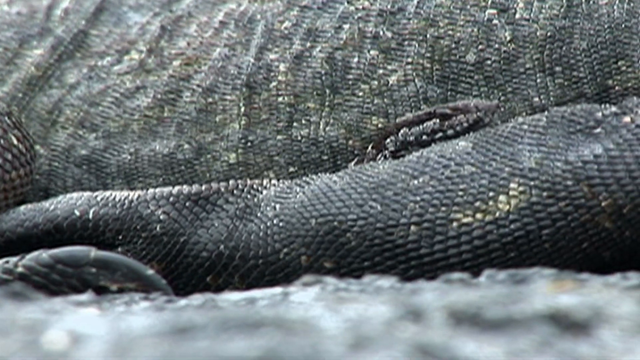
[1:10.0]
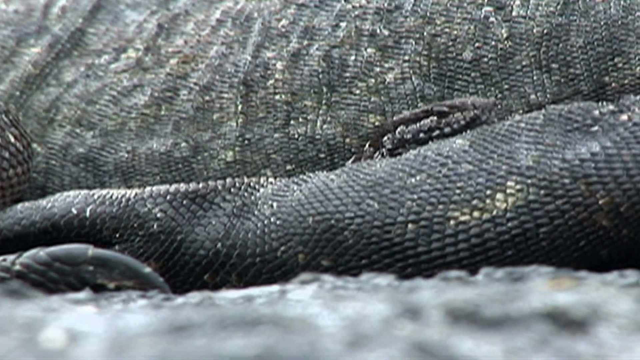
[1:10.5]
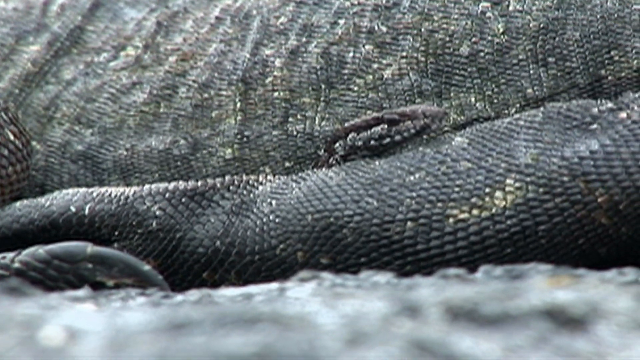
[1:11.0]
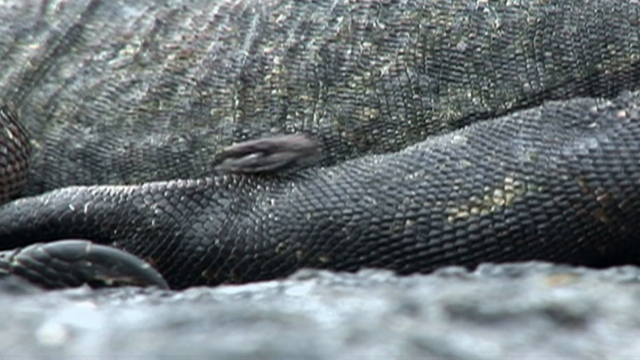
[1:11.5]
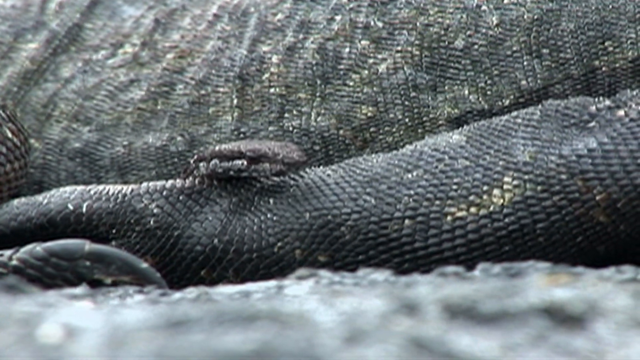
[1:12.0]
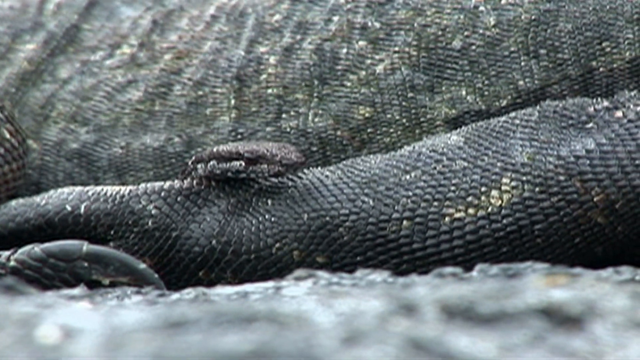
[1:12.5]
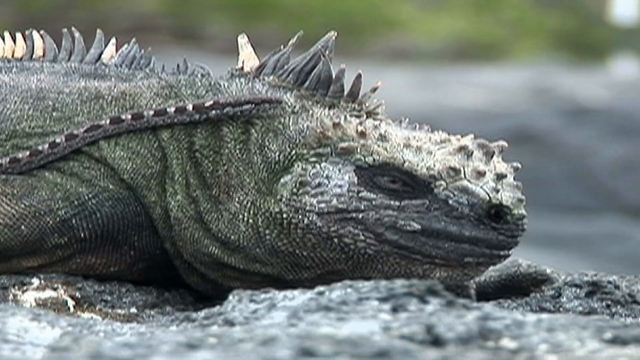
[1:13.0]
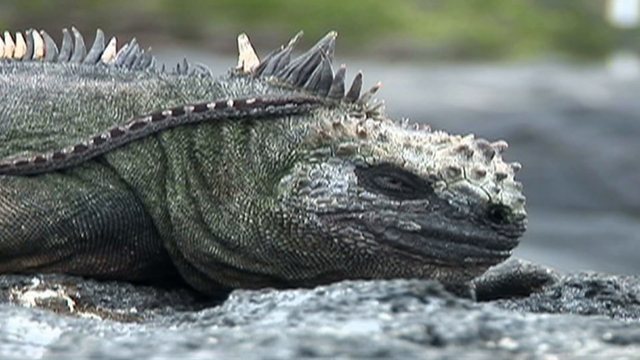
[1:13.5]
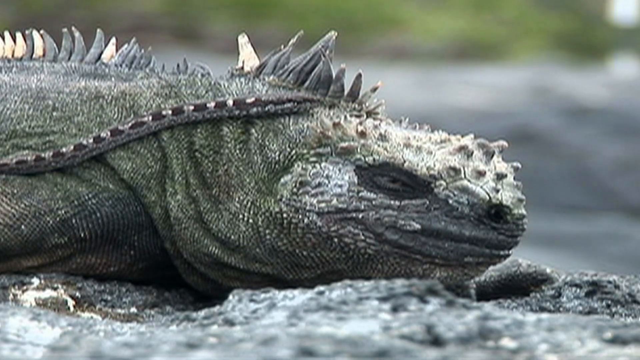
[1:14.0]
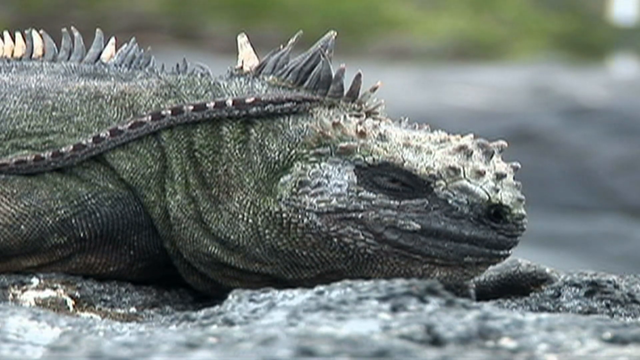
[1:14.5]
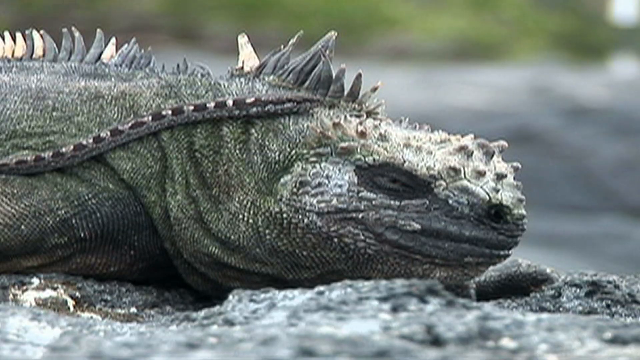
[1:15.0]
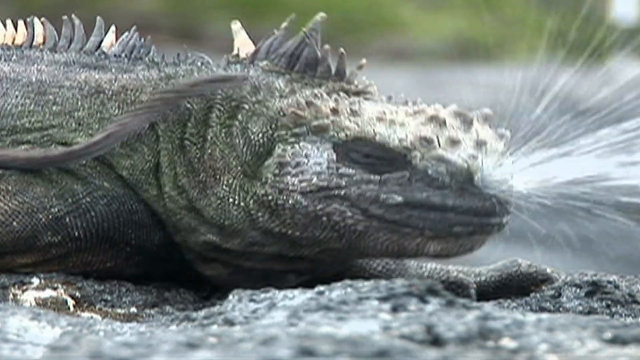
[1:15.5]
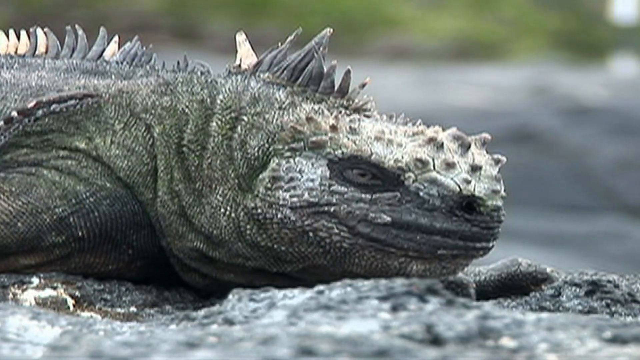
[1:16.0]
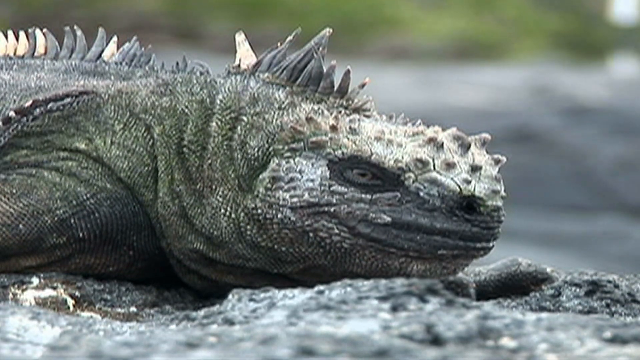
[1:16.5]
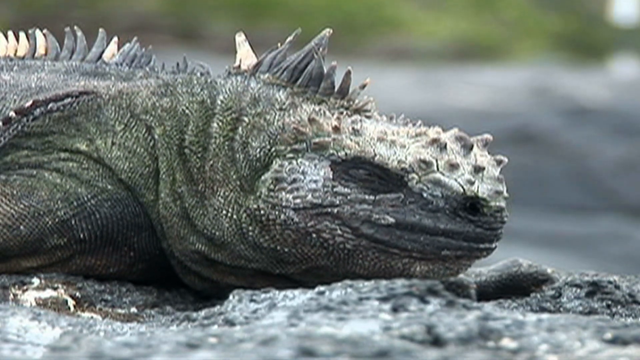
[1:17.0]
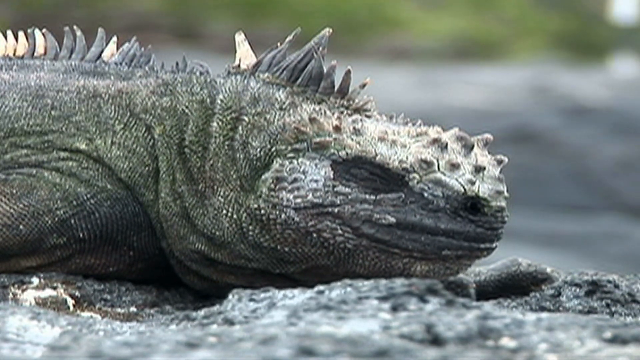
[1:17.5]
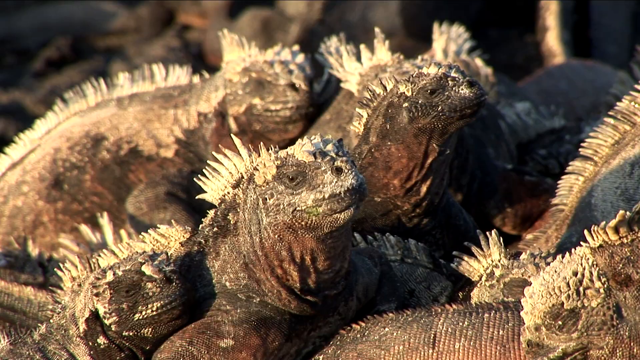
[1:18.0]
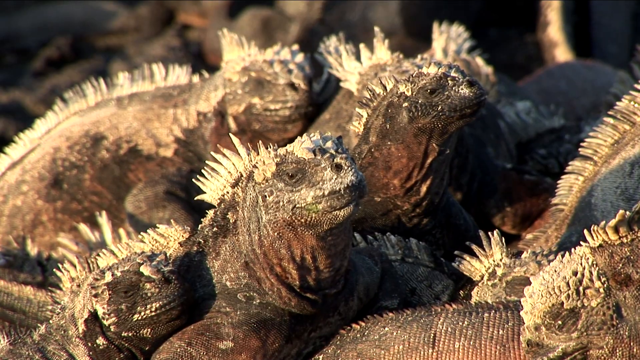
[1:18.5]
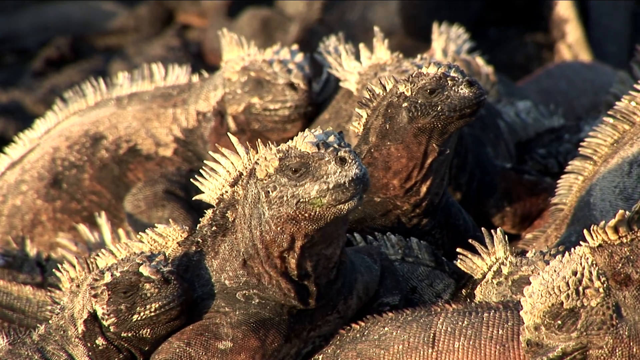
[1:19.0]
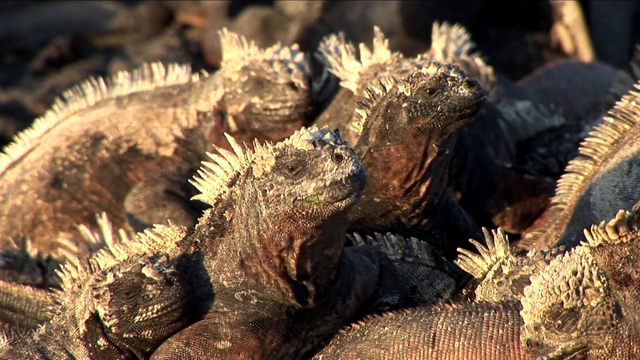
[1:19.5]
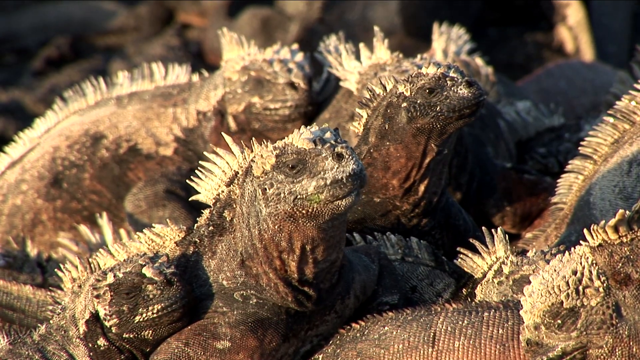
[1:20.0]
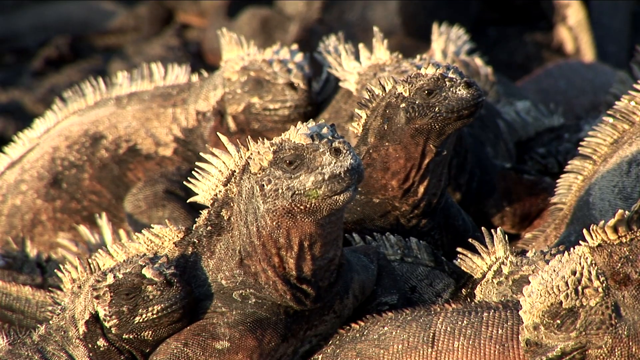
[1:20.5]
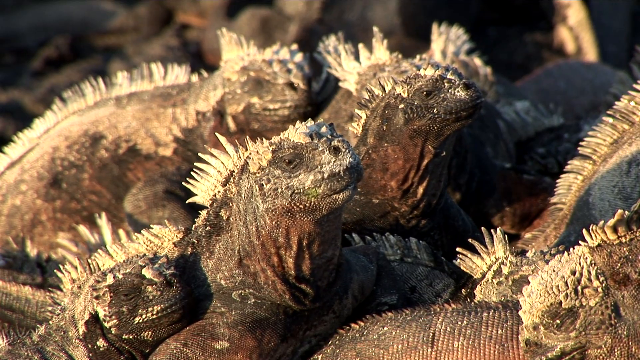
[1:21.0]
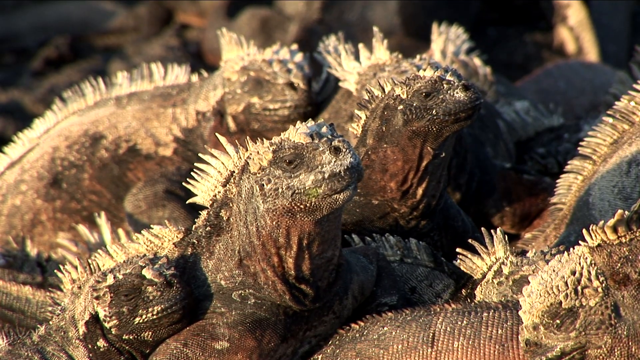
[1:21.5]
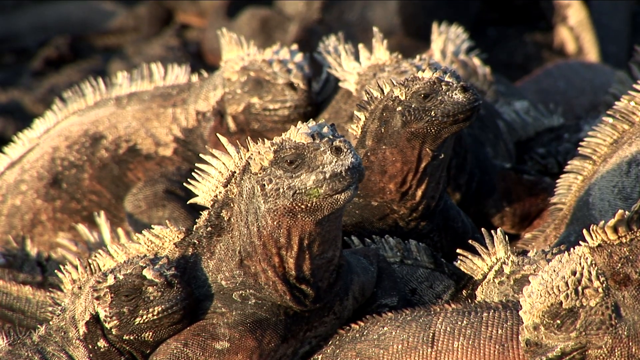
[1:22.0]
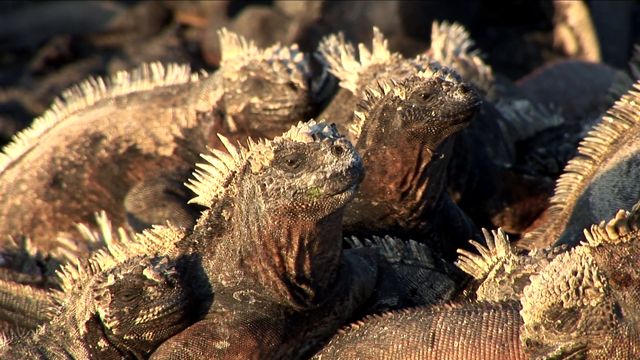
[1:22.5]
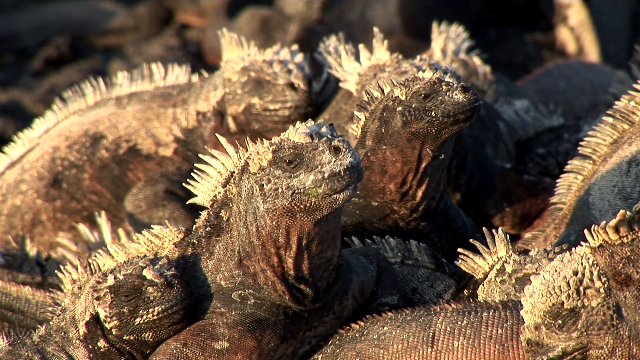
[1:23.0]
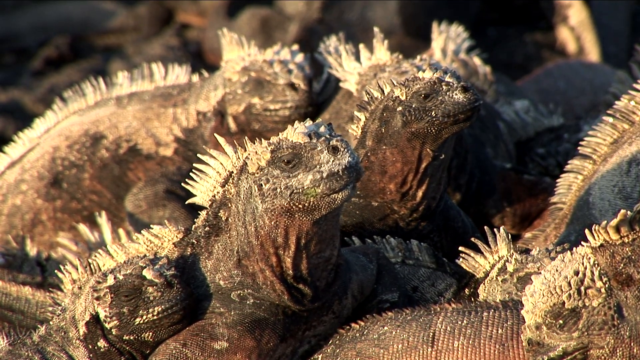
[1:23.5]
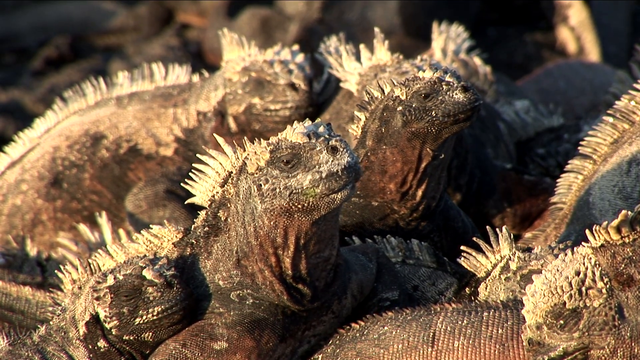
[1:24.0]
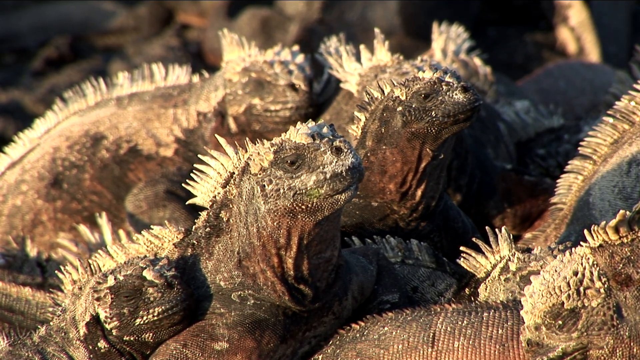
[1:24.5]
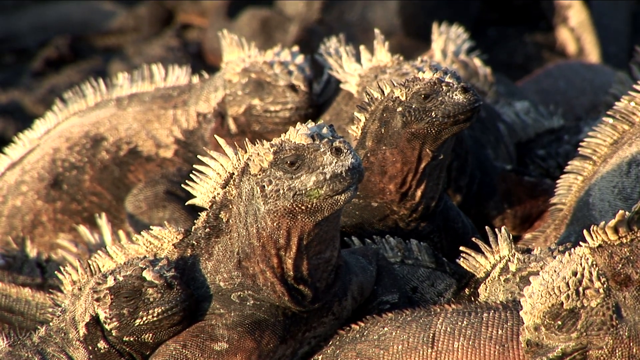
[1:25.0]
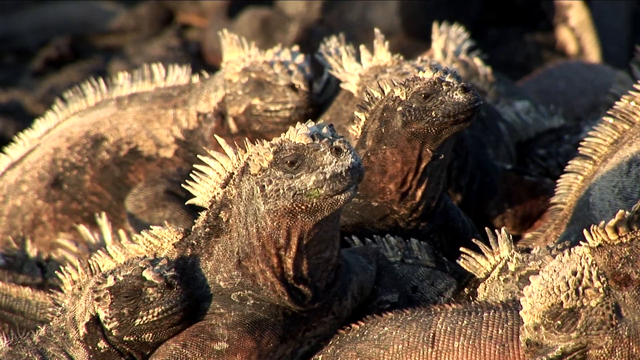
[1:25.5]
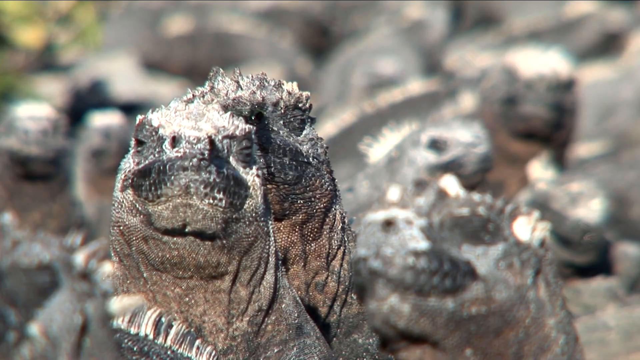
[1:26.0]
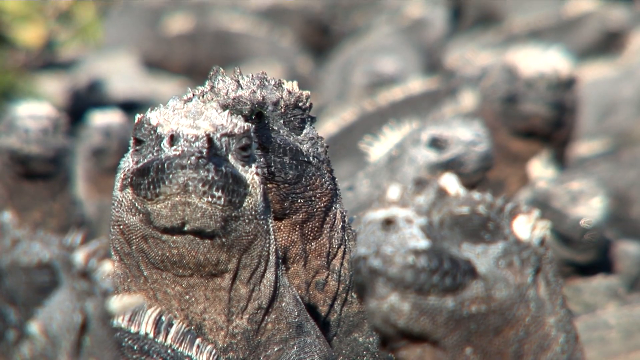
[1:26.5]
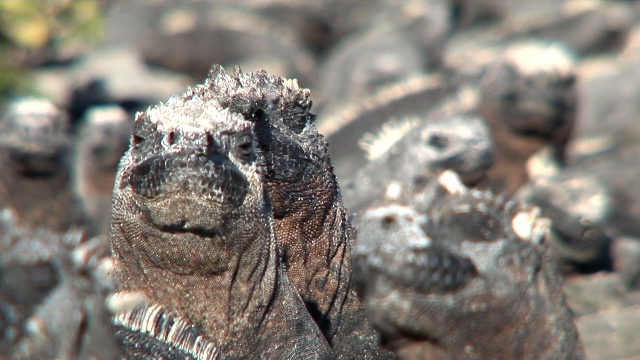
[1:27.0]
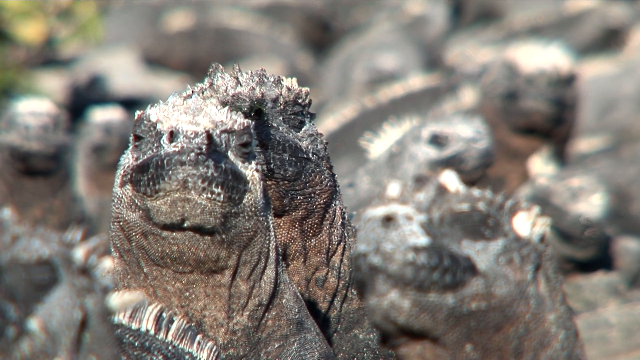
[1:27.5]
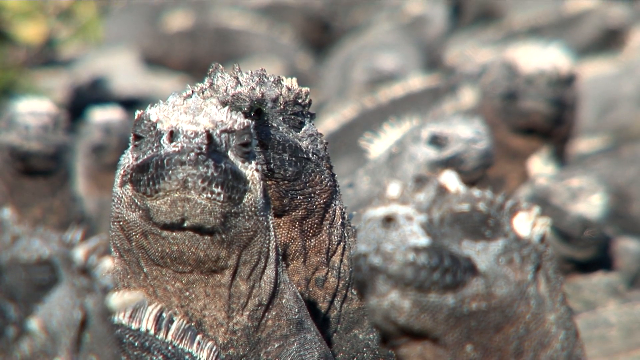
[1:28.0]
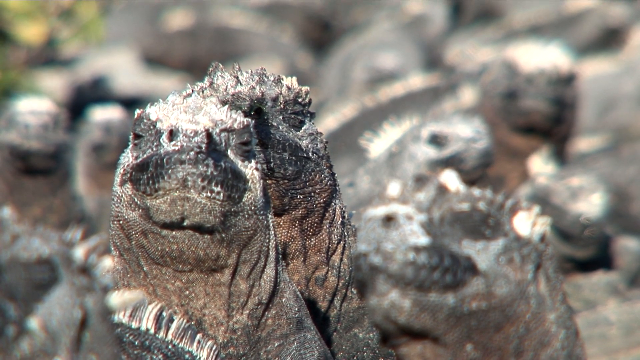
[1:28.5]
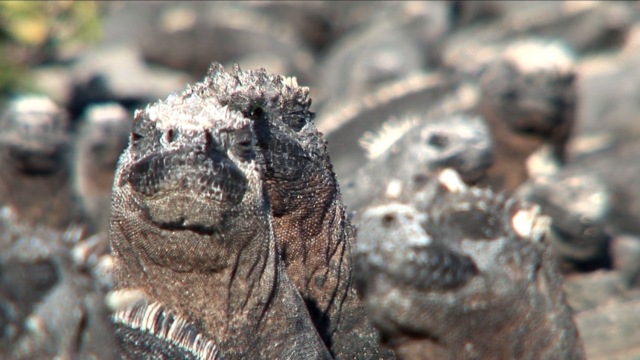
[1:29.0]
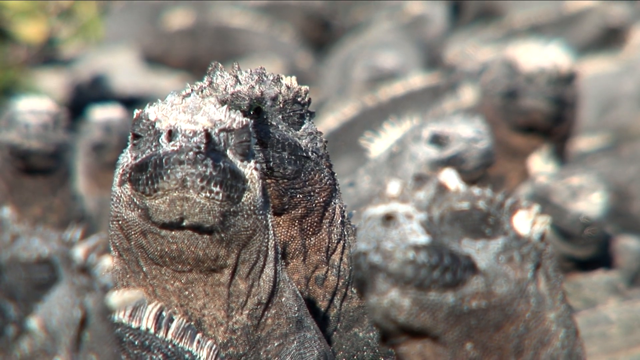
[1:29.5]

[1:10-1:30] The iguana is shown with a little snake creeping up behind its tail. The iguana looks like it is resting; its scales are black and dark, and it seems to be in the shade. The iguana is then shown with green scales and spikes, seemingly resting, its mouth closed and its eyes droopy. A little snake crawls up its head. As the iguana notices the snake, it shoots out water and flinches, and the snake retreats. Once the snake retreats, the iguana closes its eyes as if going to sleep. The scene transitions to a family of about three or four iguanas that seem younger, as they look smaller and their spikes are significantly smaller. They look into the camera and breathe, as if enjoying the sun. Then another view shows the iguana family, around six or seven of them, resting with their eyes half closed, in their natural habitat.